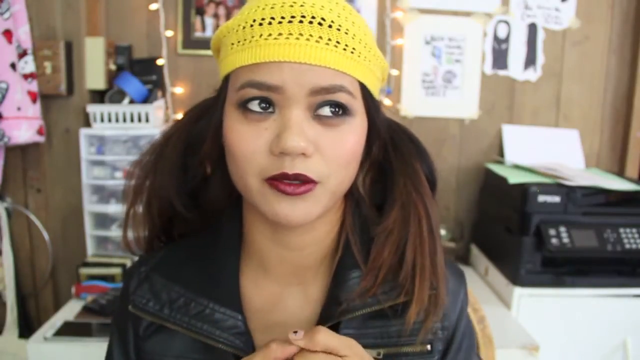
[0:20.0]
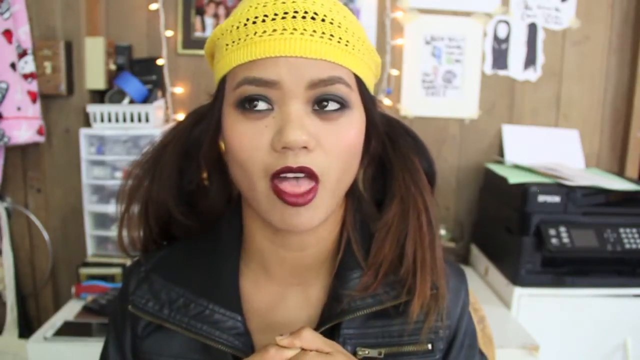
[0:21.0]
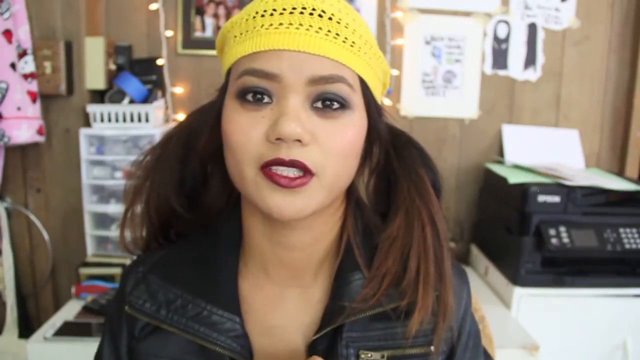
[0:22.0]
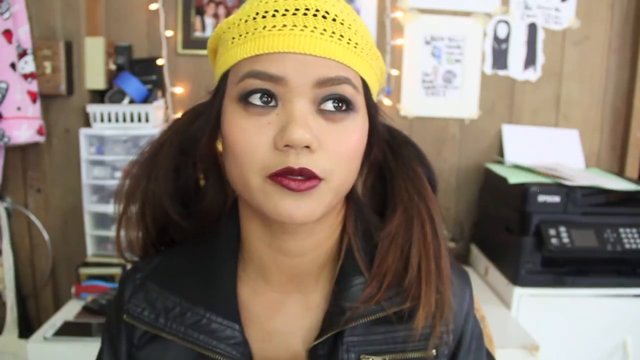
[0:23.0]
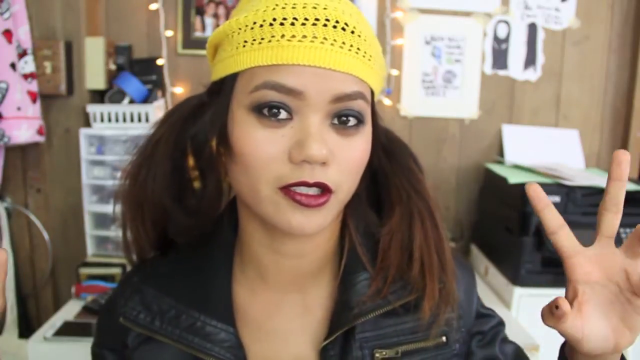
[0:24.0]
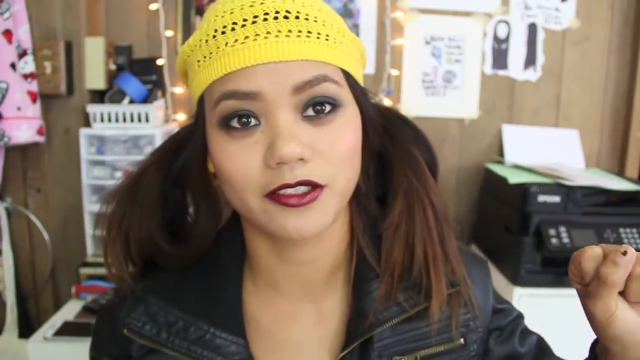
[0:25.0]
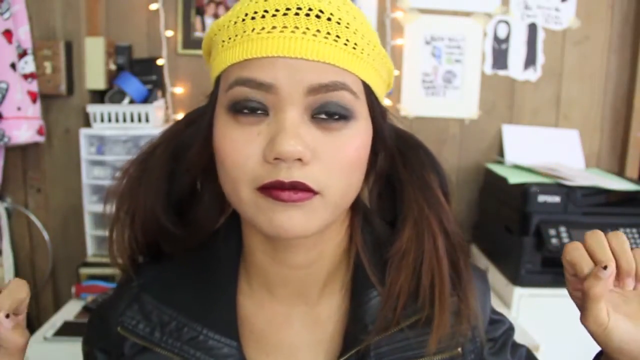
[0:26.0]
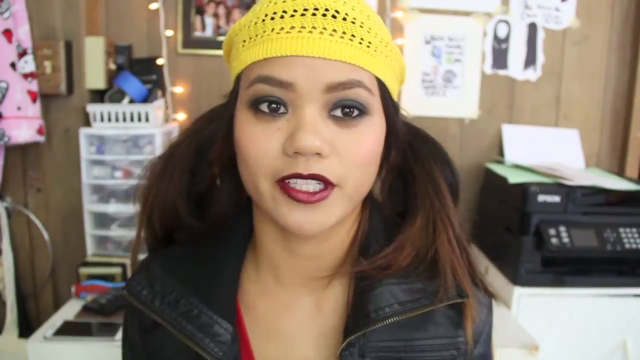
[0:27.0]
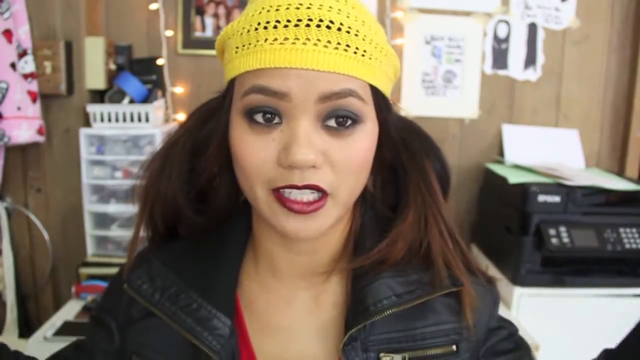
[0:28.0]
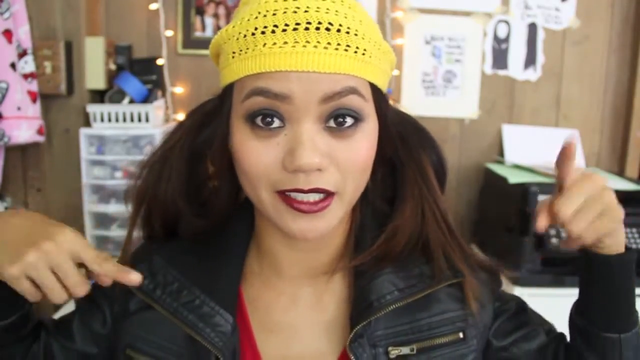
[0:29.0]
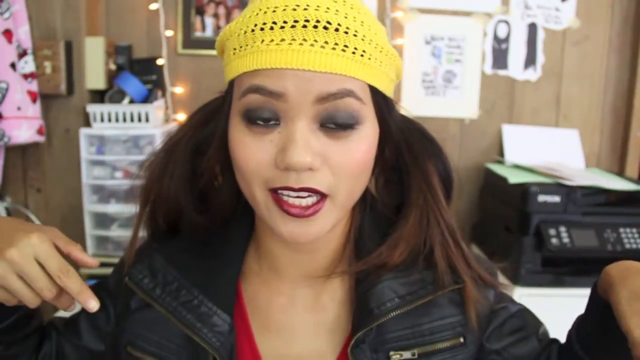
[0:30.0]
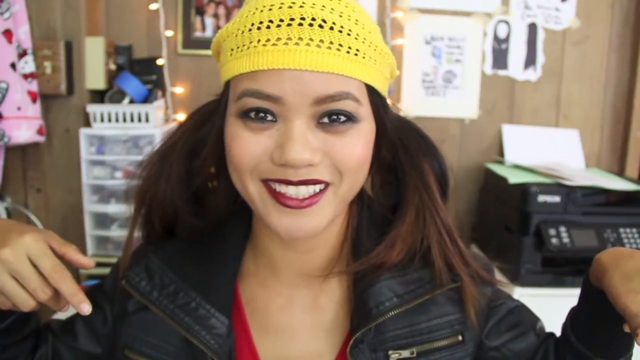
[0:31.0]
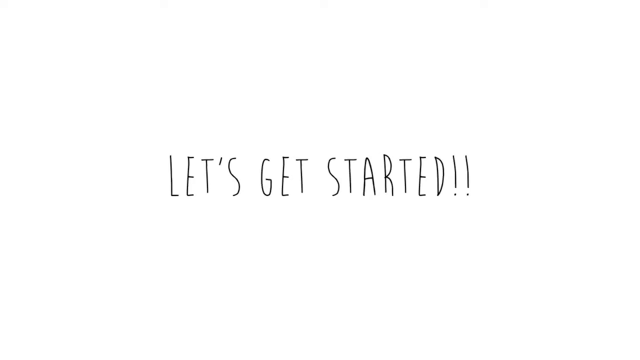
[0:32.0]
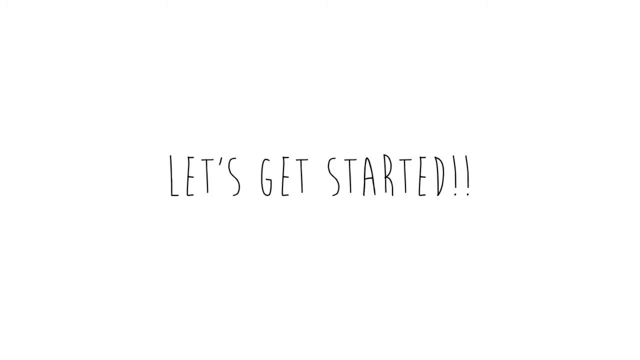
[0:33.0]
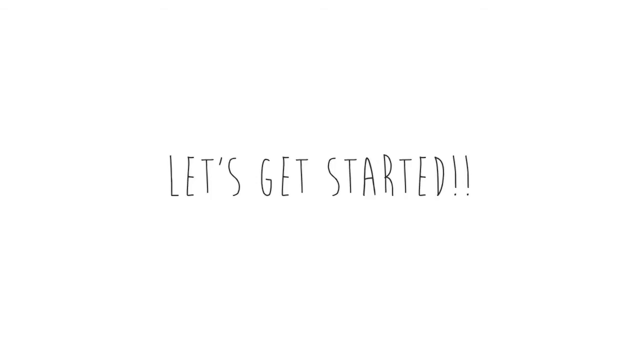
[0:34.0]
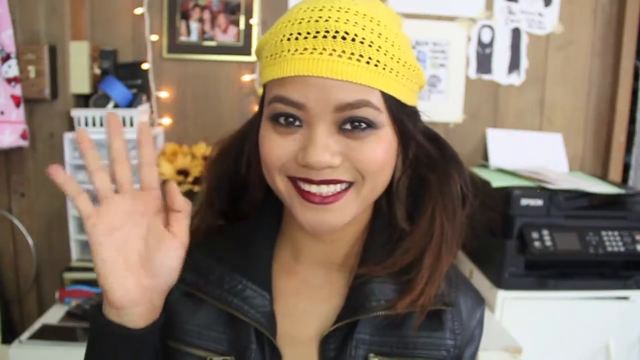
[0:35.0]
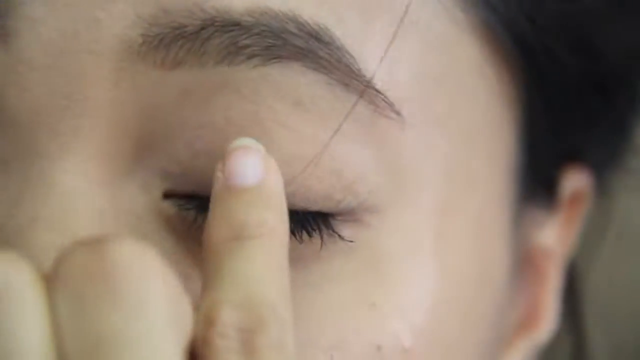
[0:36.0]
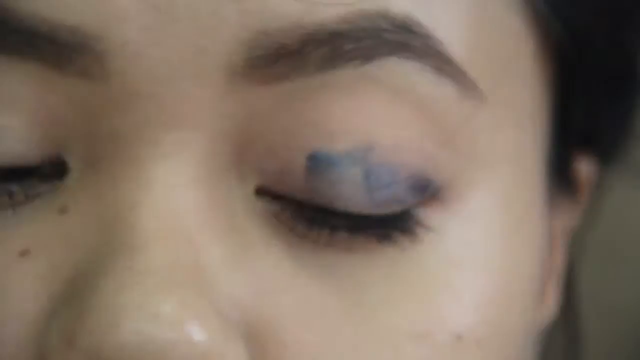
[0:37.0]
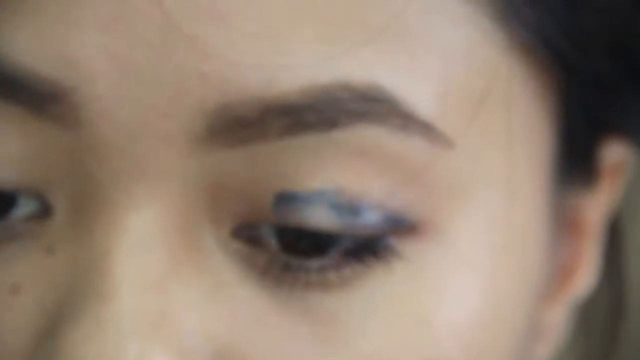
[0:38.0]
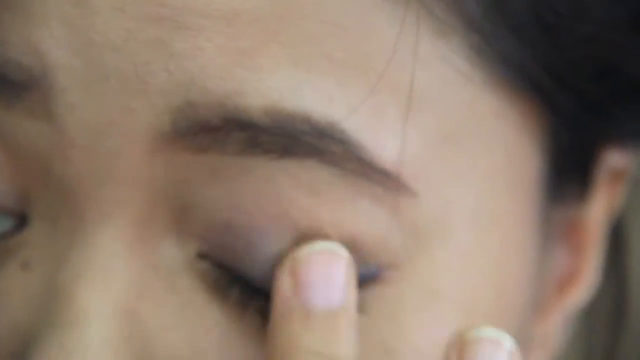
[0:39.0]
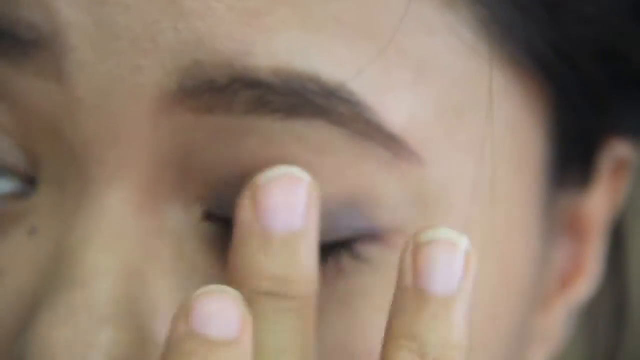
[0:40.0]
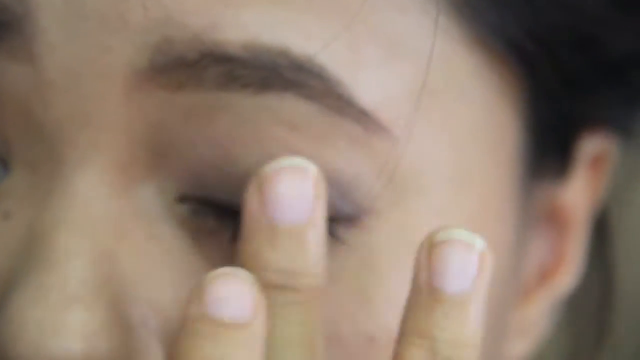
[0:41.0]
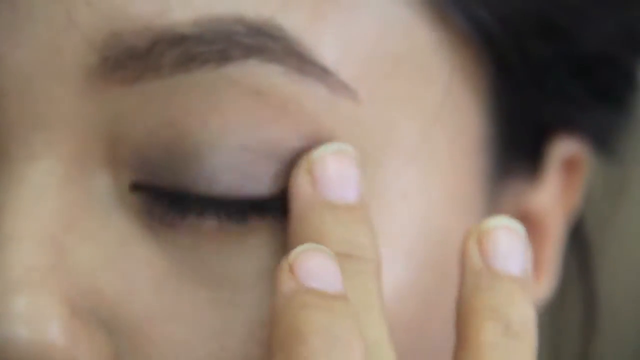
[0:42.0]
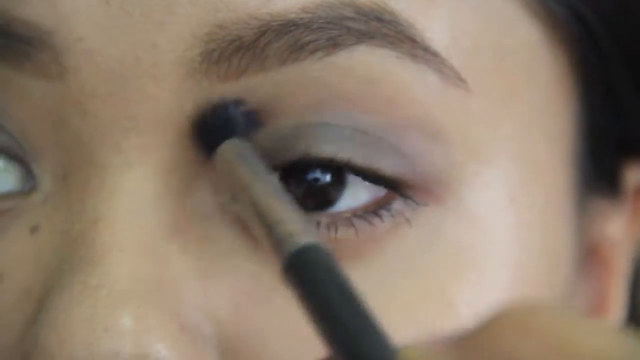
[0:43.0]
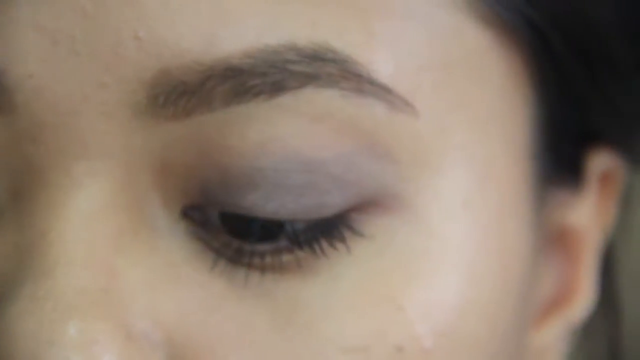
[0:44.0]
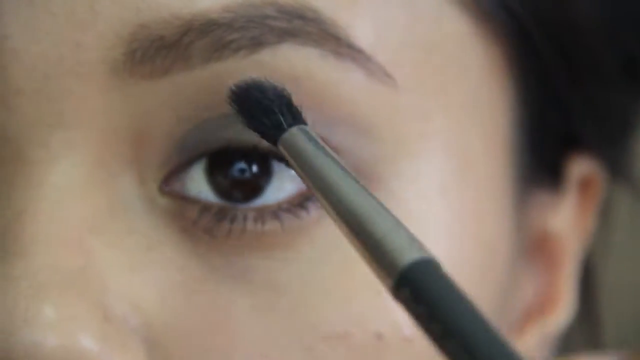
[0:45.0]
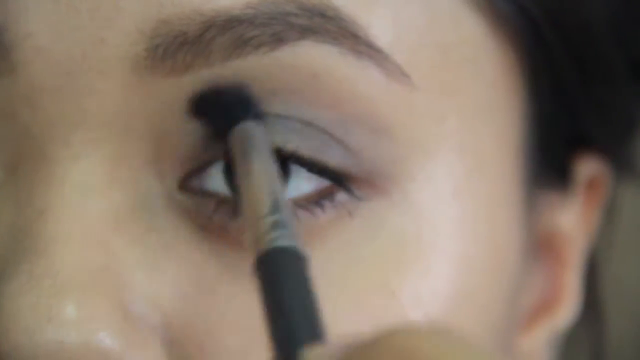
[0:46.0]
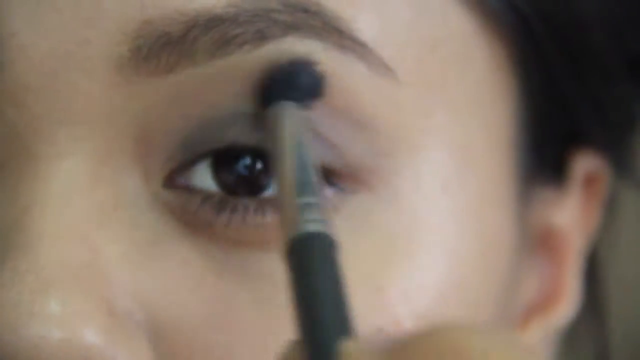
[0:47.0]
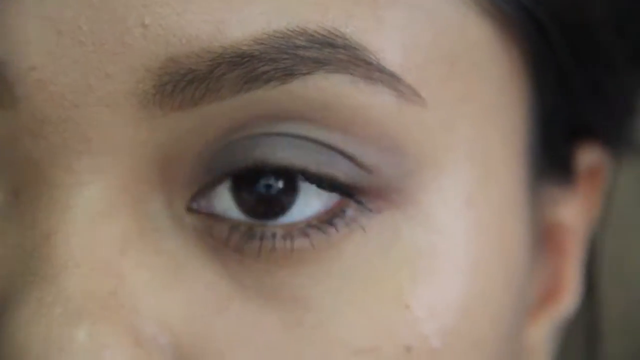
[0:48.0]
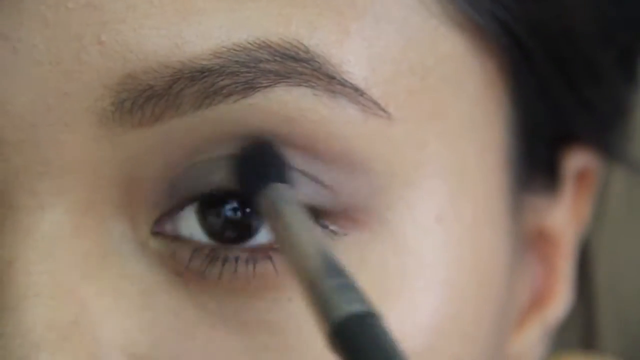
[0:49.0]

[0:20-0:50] A printer is in the background, and it looks like the woman is at work. It looks like she is explaining her look, and she points at her feet. Text on screen reads "let's get started." She then shows how she applies her eyeshadow, starting with a dark blue color applied lightly, so the blue is barely noticeable at first.